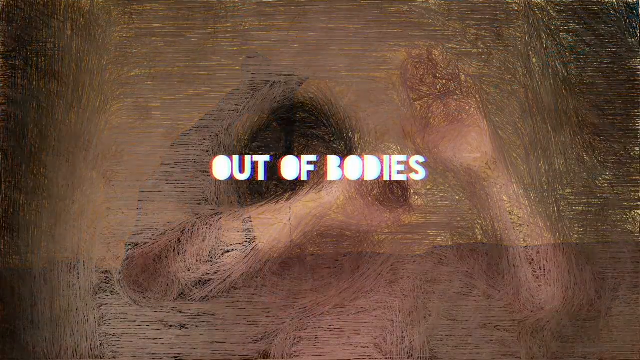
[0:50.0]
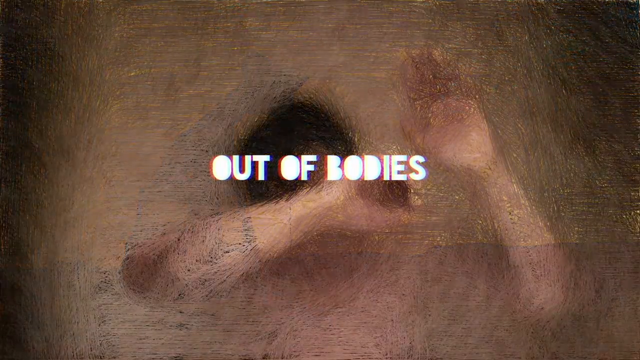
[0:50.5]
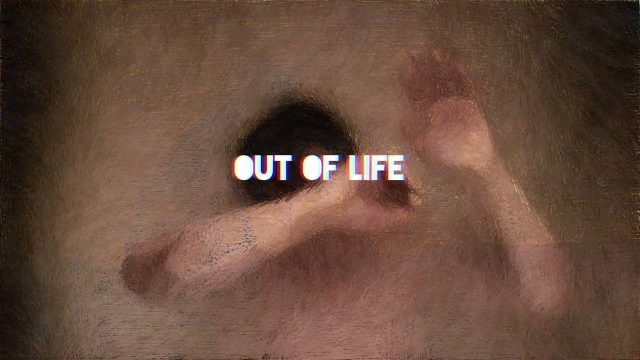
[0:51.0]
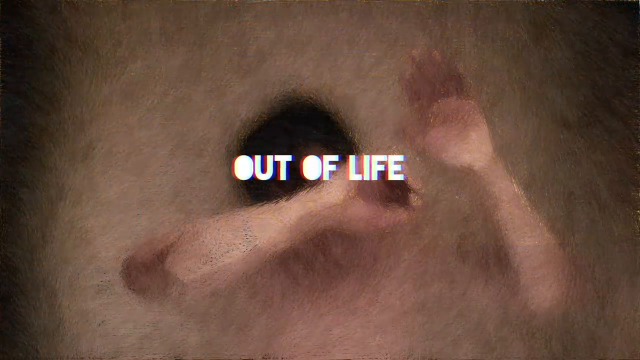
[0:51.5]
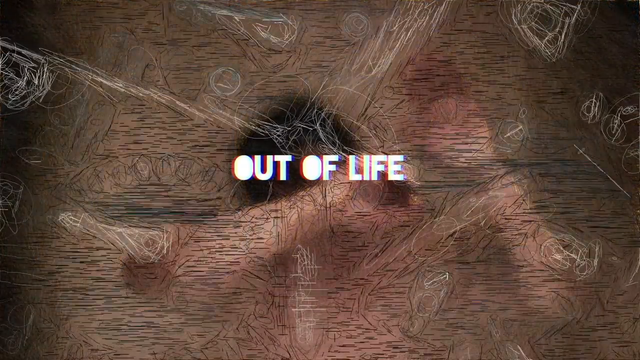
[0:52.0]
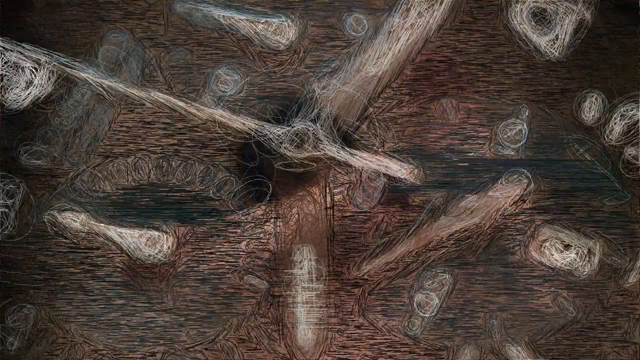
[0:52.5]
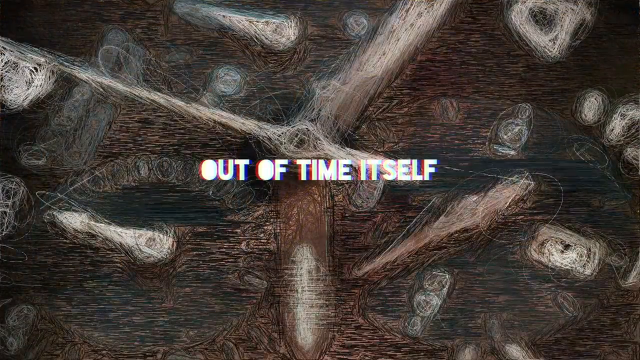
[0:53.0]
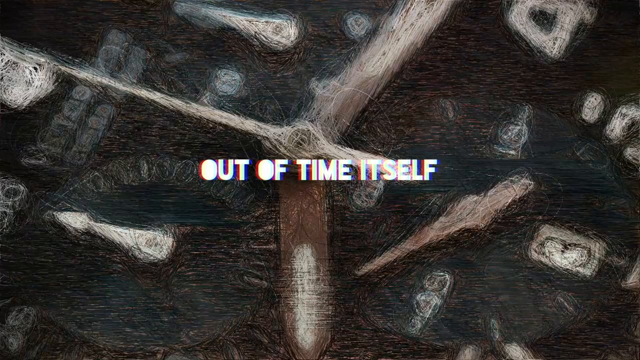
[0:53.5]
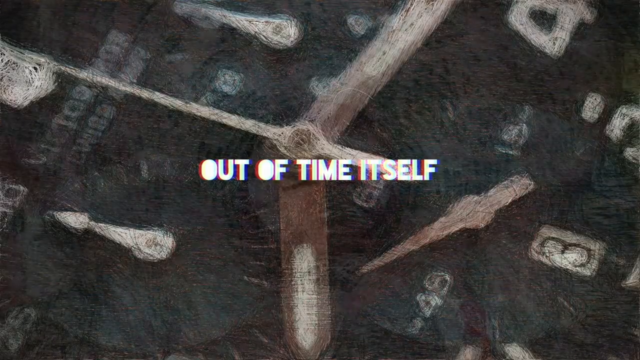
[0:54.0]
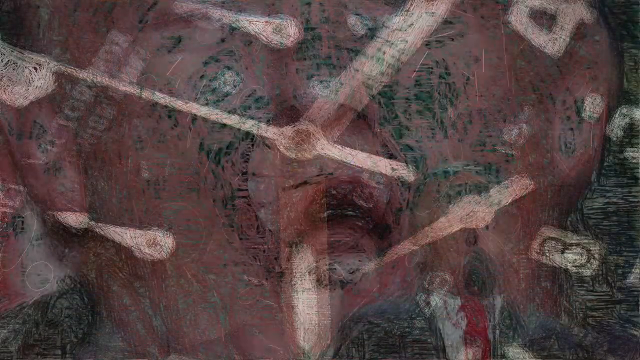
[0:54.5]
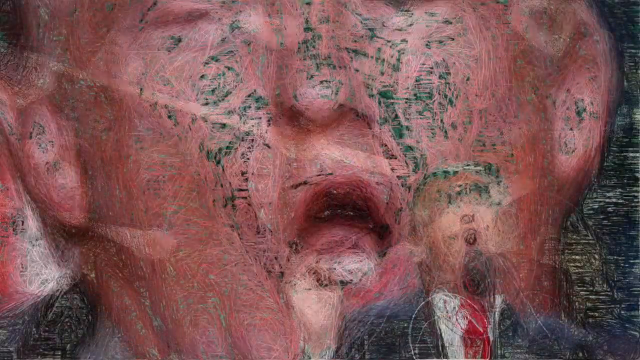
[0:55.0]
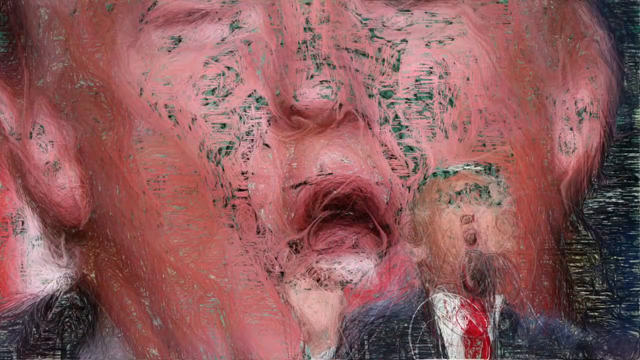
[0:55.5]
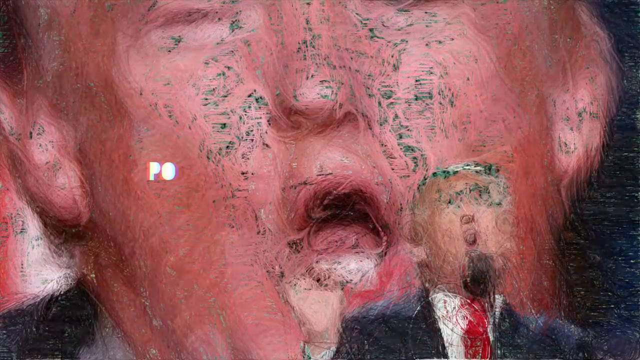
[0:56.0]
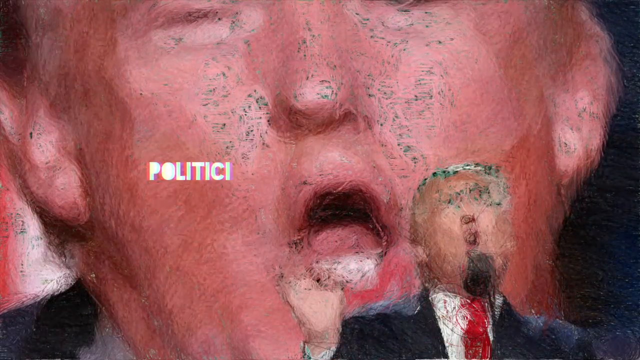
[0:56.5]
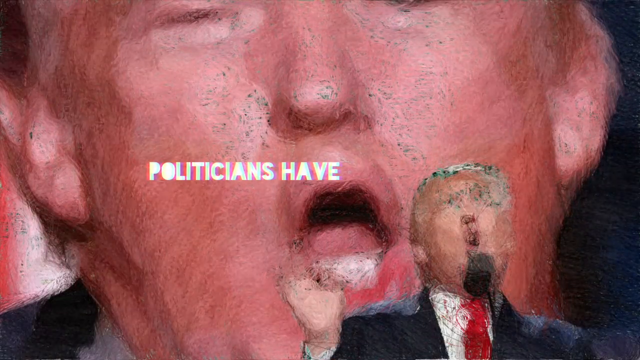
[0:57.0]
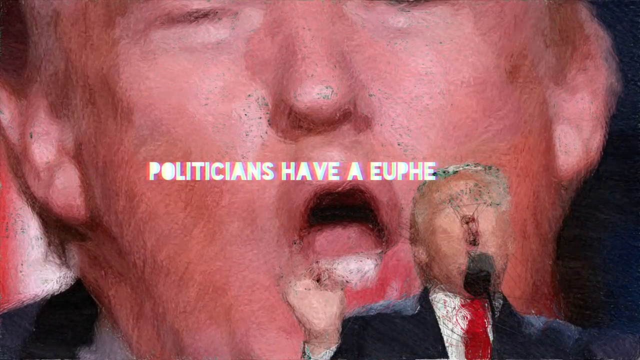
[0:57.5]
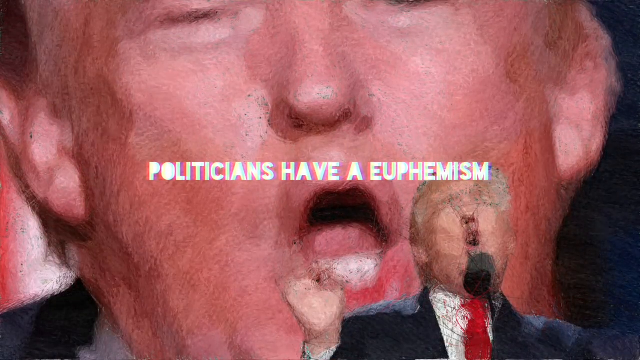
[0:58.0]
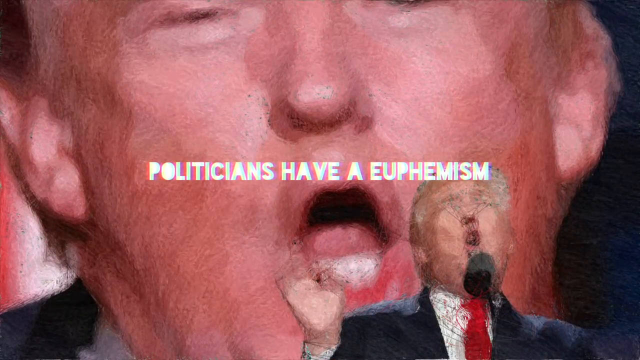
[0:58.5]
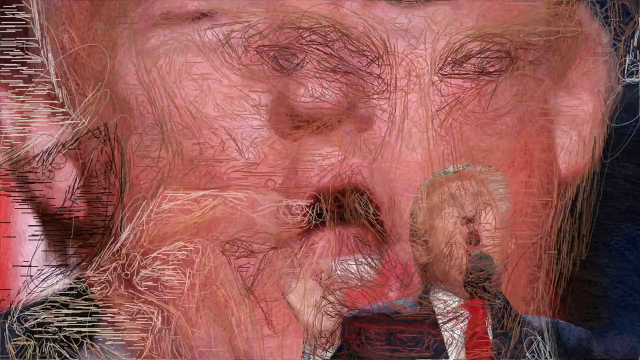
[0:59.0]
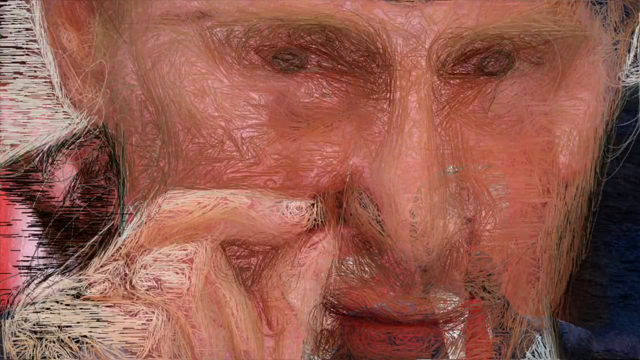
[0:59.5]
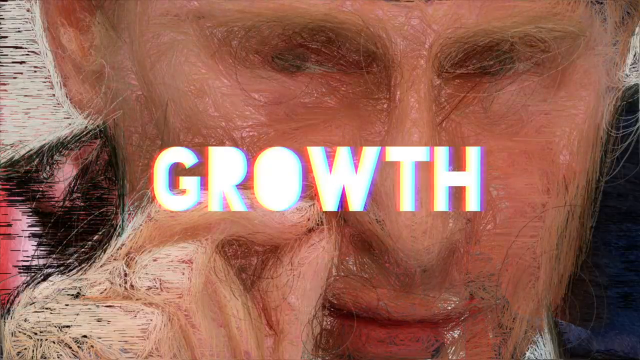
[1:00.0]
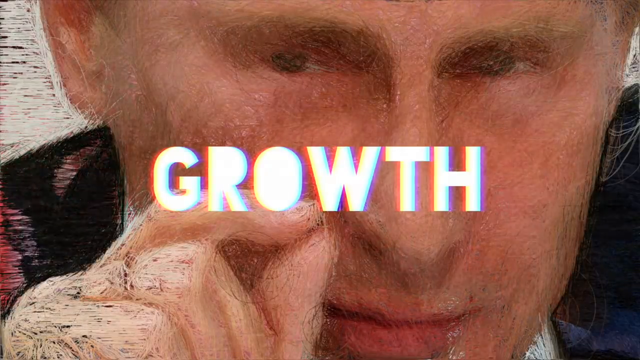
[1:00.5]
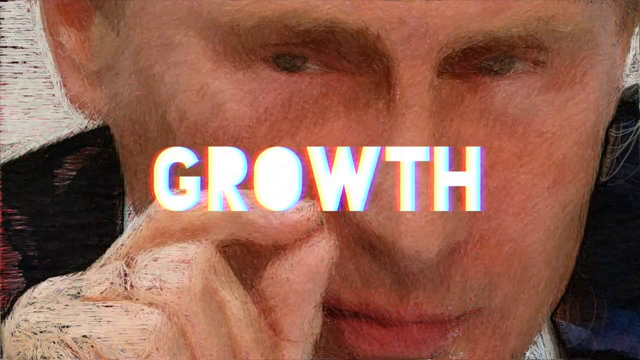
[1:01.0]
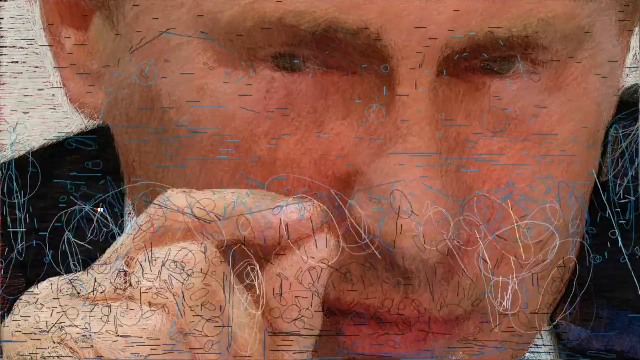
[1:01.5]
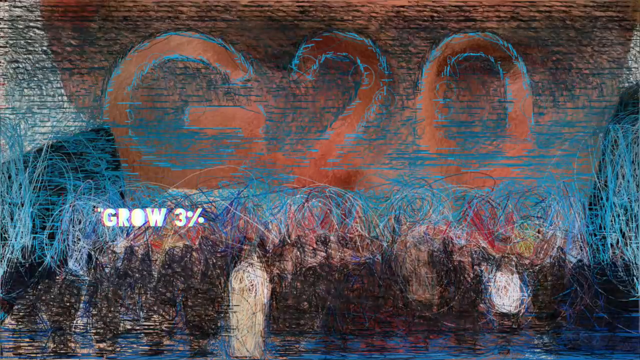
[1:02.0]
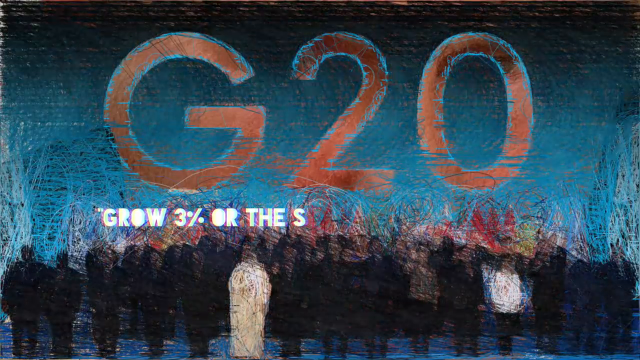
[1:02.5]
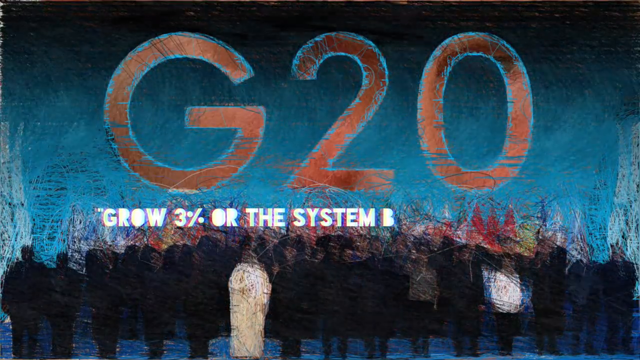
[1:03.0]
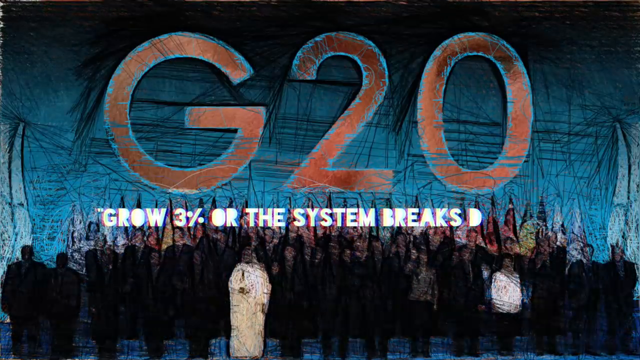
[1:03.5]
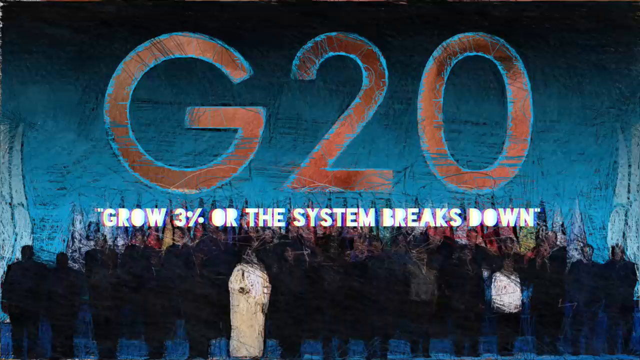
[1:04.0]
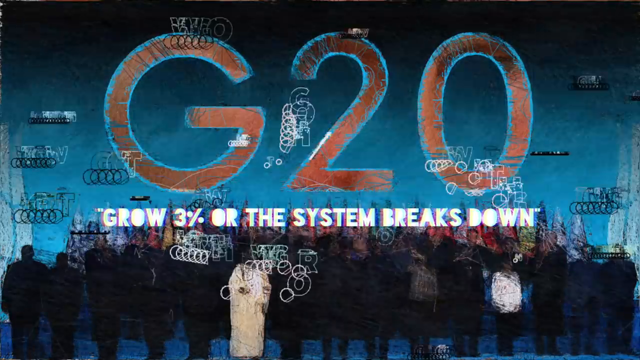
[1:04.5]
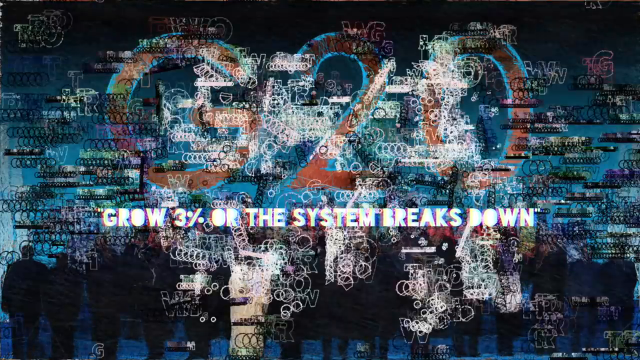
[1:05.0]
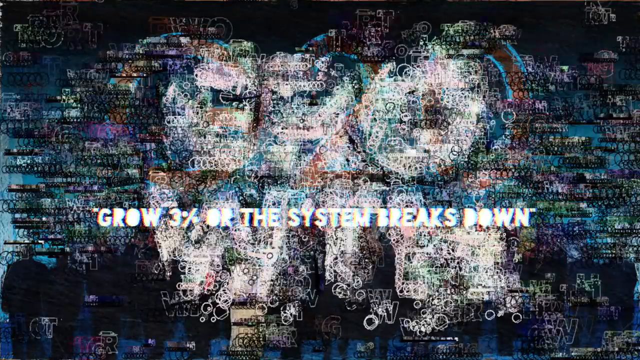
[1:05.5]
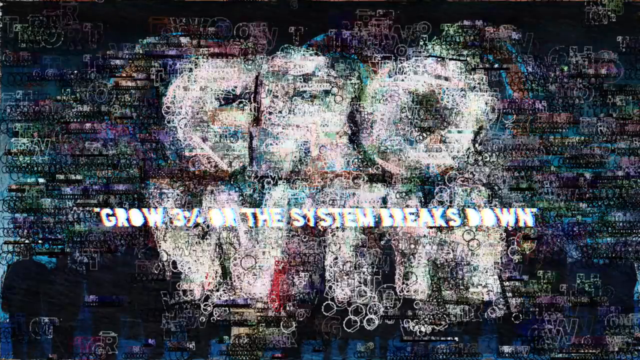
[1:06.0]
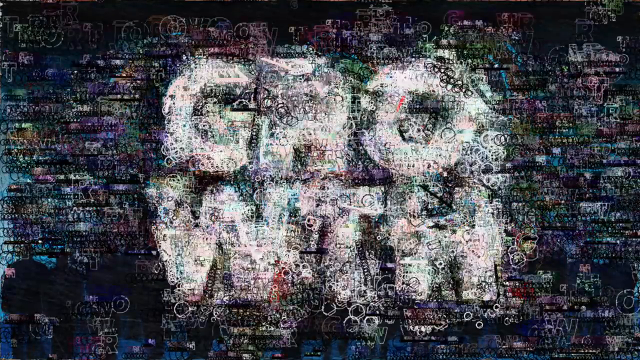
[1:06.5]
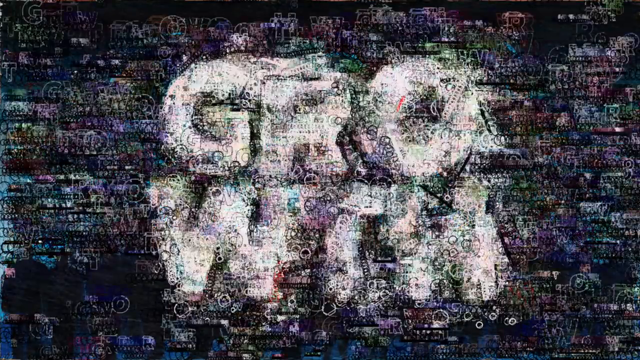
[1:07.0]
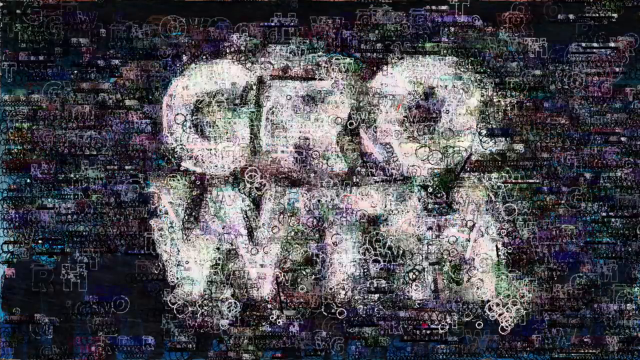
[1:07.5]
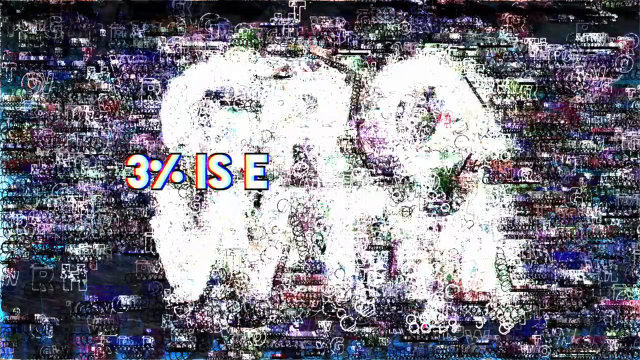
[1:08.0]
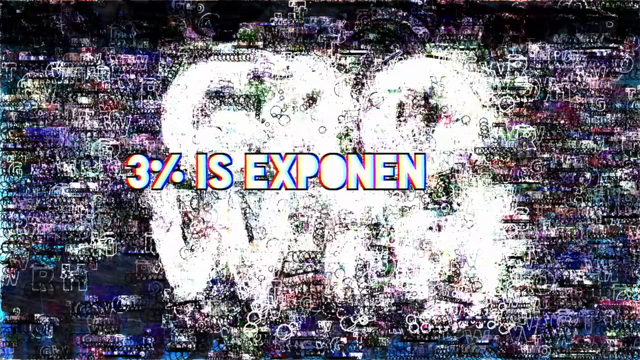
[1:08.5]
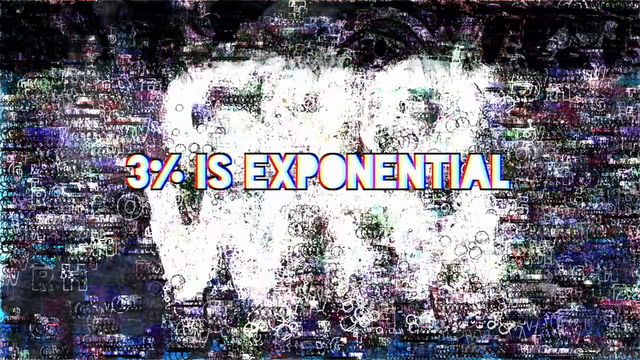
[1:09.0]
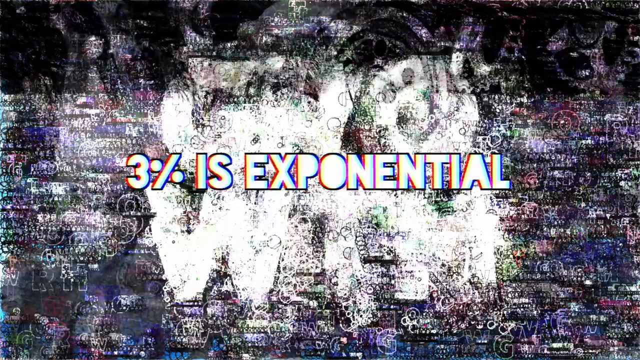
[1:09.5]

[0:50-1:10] Text continues describing capitalism squeezing life out of bodies, "out of the land, out of the factories", "out of life, out of time itself". Text then begins "politicians have", and a picture of Donald Trump and Vladimir Putin appears. On-screen text reads "G20 grow 3% or the system breaks down" and then "3% is exponential".